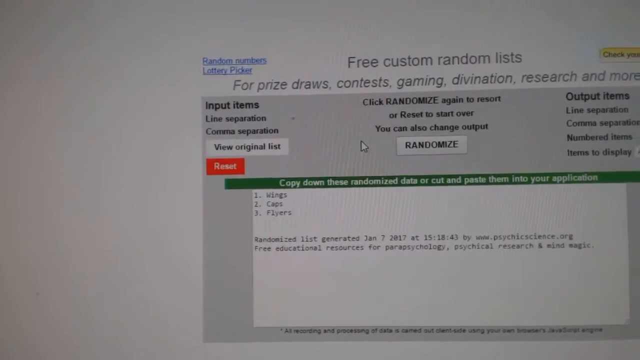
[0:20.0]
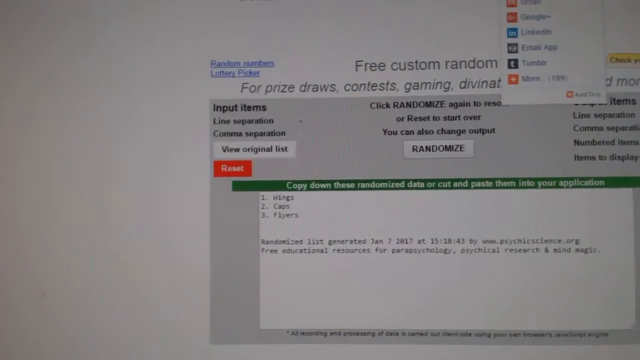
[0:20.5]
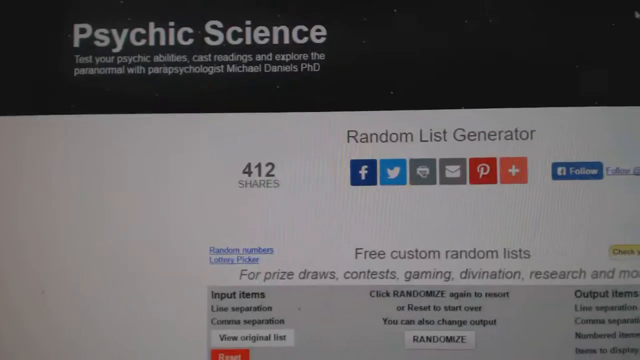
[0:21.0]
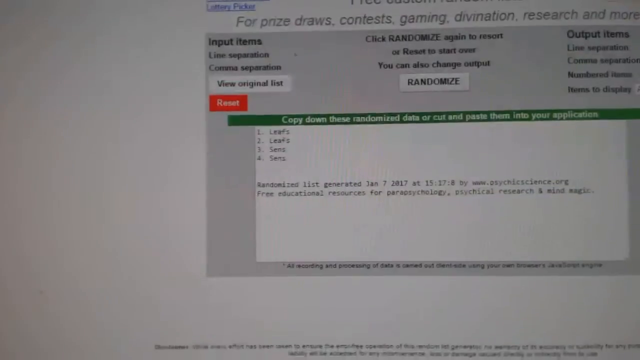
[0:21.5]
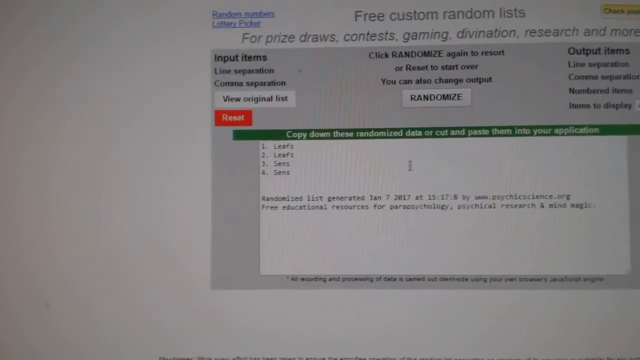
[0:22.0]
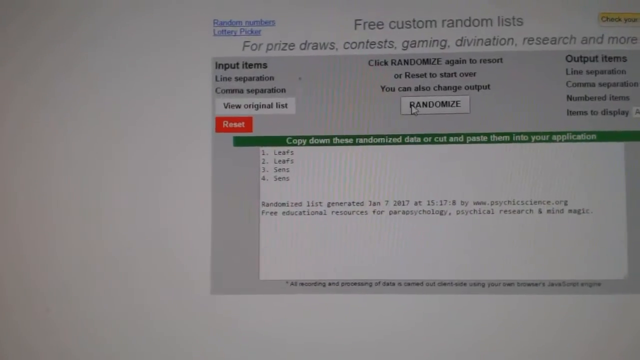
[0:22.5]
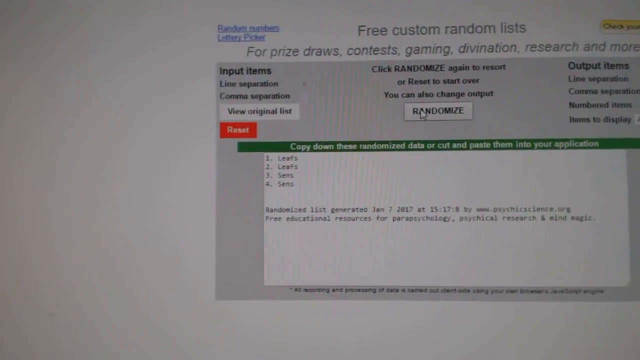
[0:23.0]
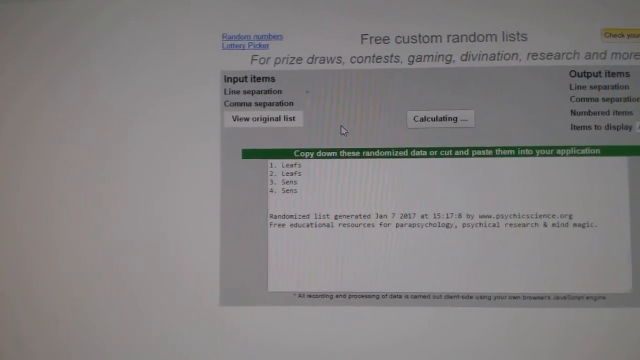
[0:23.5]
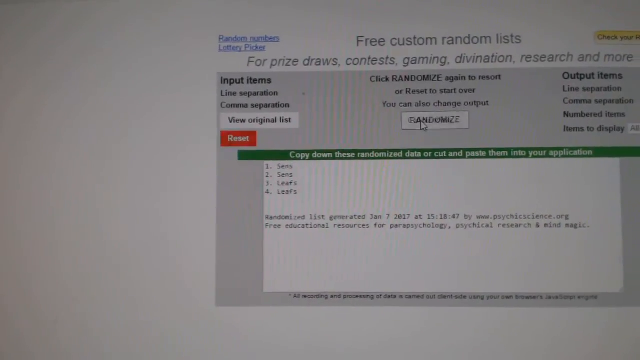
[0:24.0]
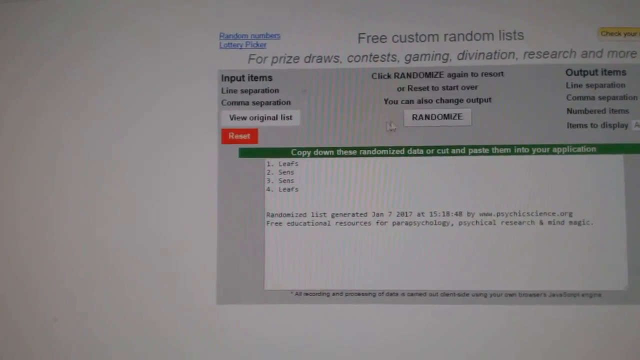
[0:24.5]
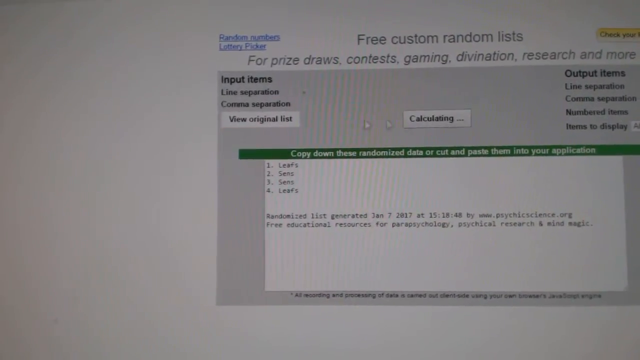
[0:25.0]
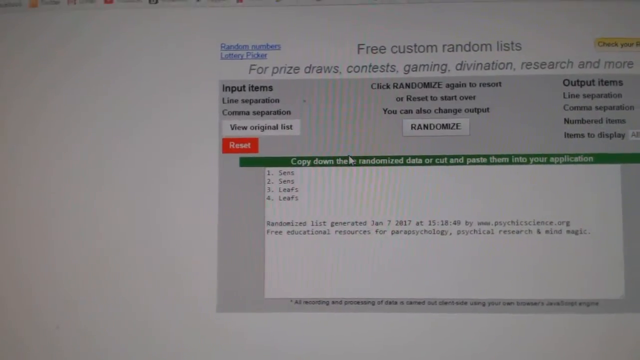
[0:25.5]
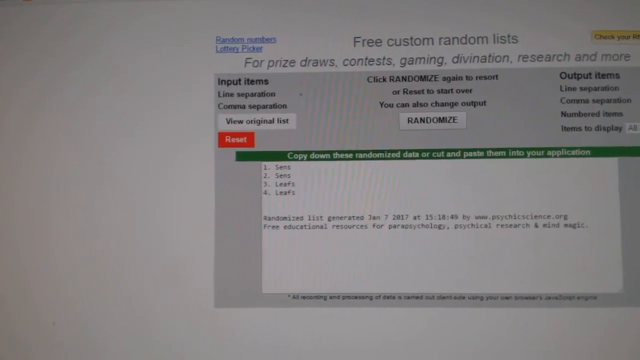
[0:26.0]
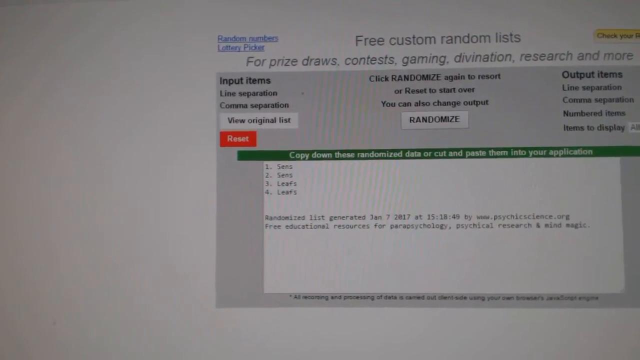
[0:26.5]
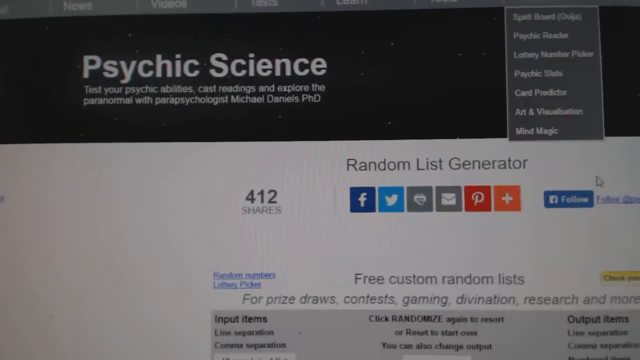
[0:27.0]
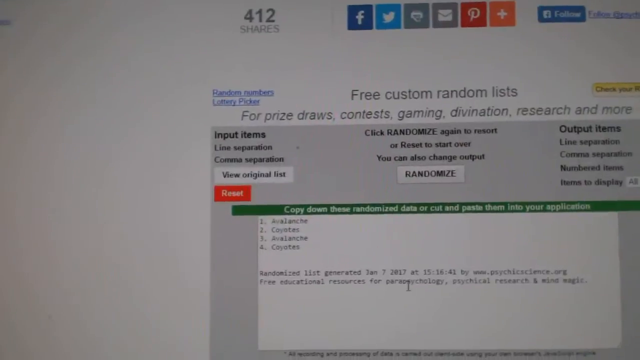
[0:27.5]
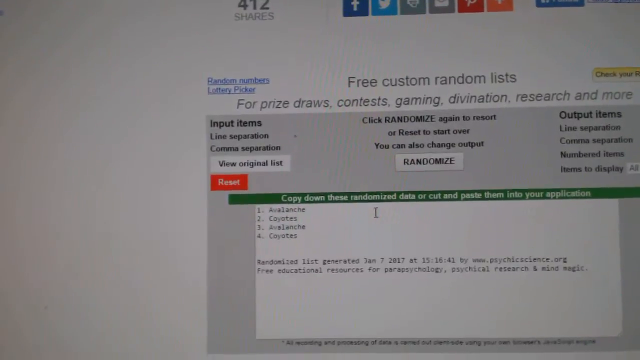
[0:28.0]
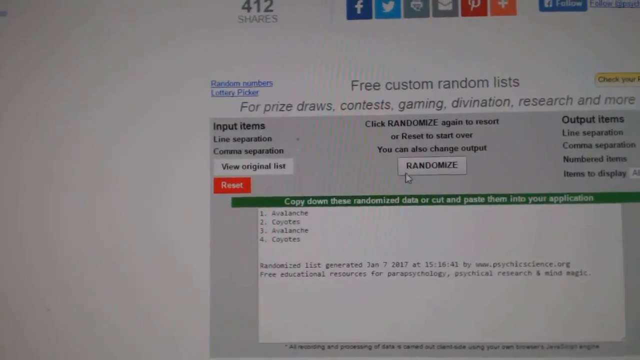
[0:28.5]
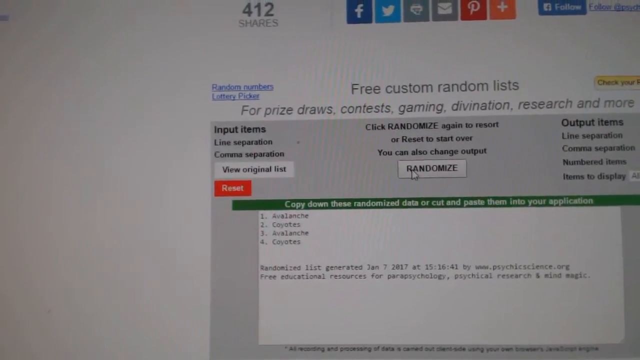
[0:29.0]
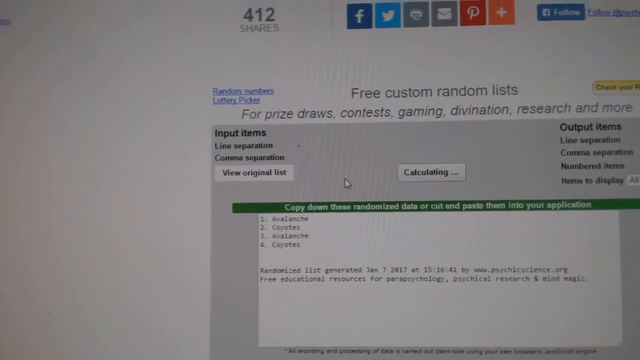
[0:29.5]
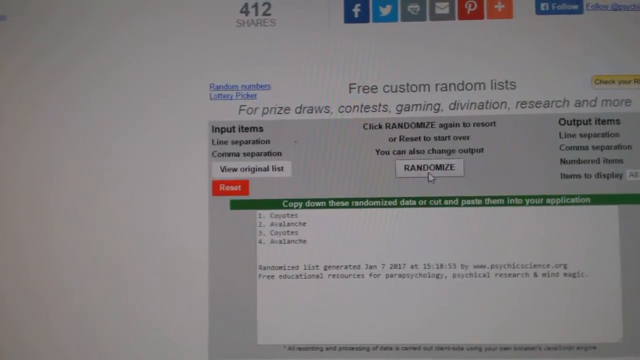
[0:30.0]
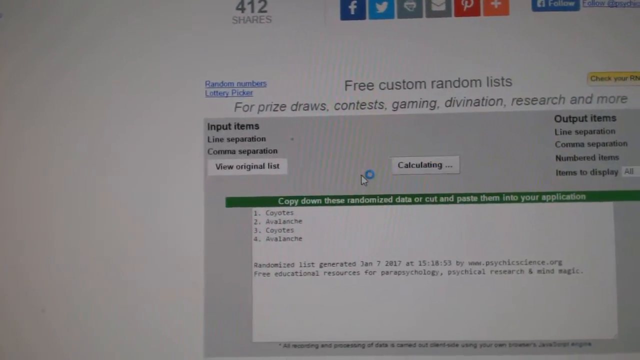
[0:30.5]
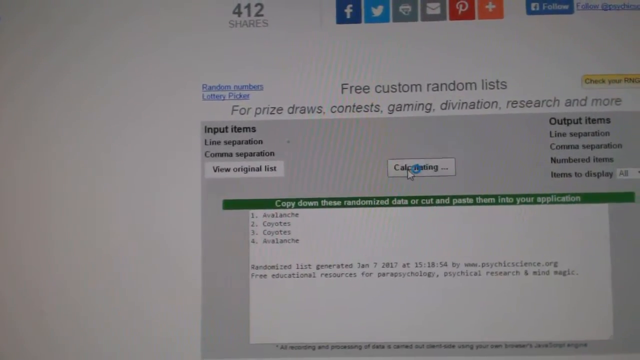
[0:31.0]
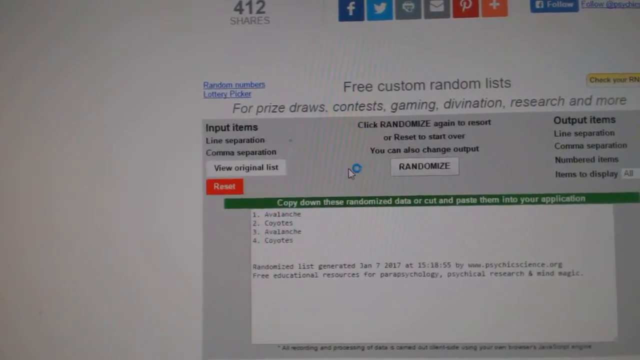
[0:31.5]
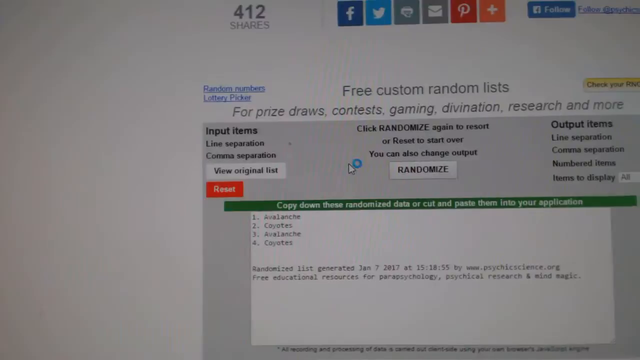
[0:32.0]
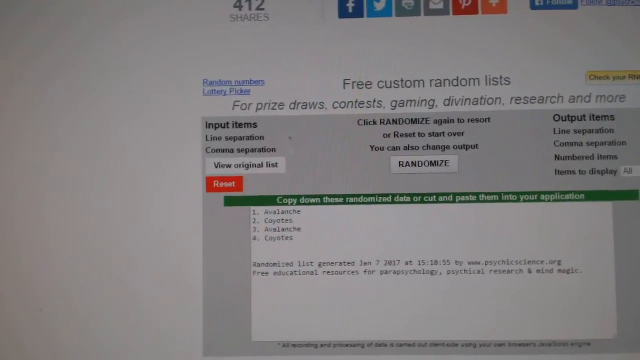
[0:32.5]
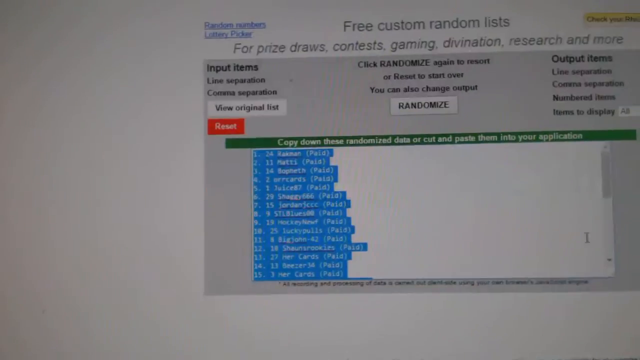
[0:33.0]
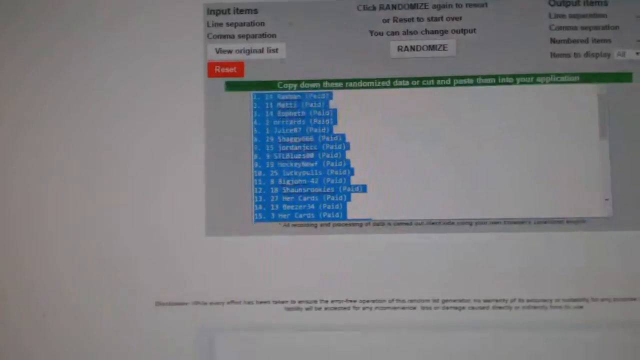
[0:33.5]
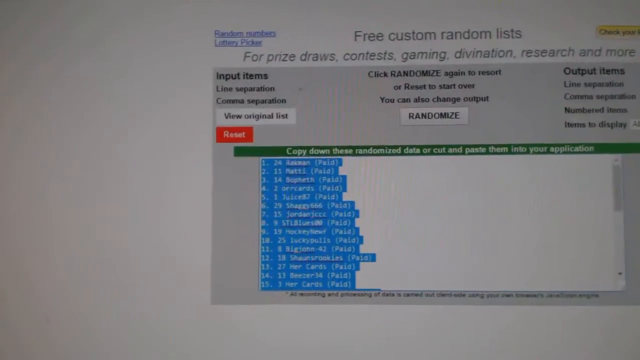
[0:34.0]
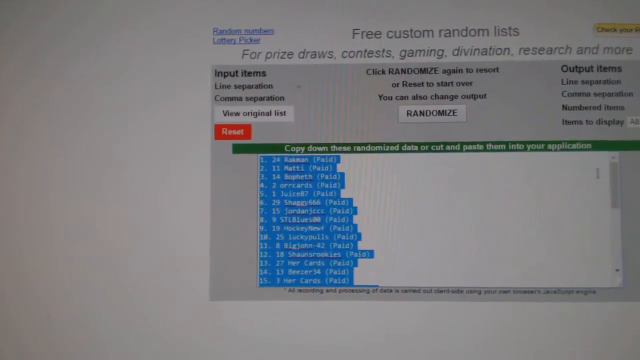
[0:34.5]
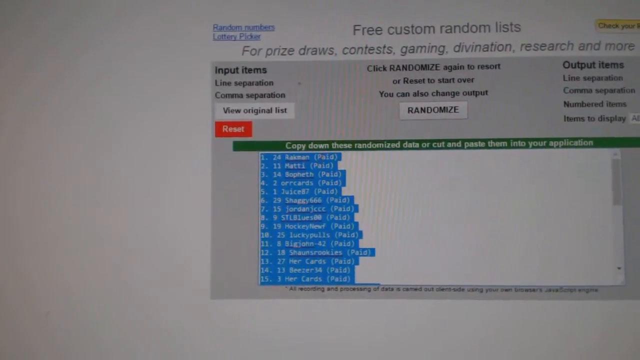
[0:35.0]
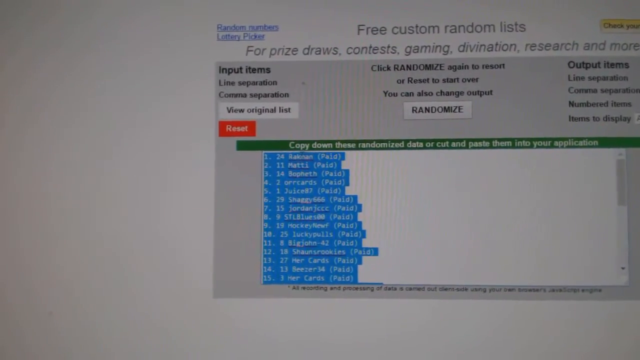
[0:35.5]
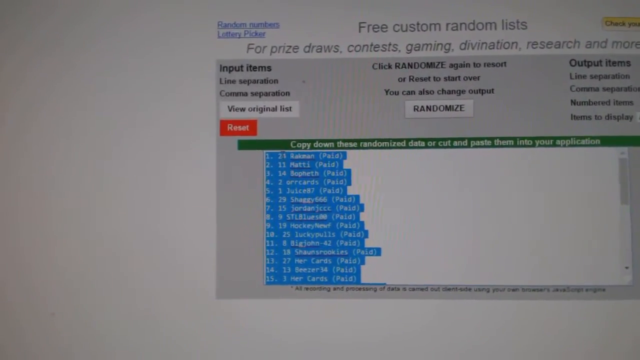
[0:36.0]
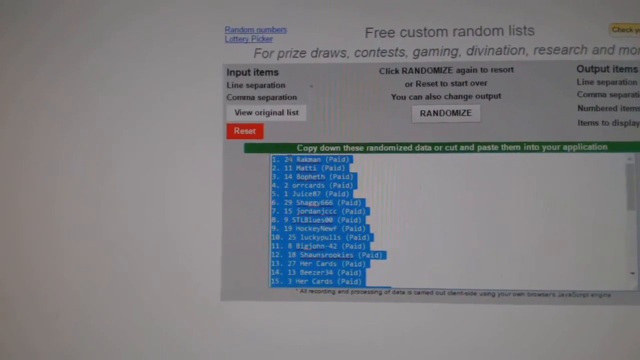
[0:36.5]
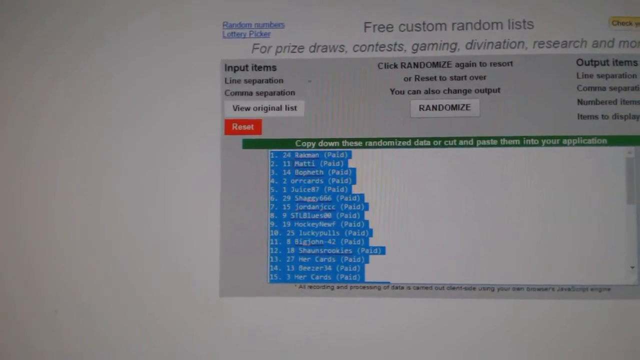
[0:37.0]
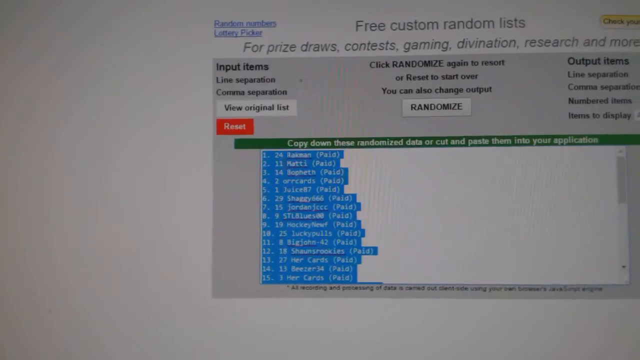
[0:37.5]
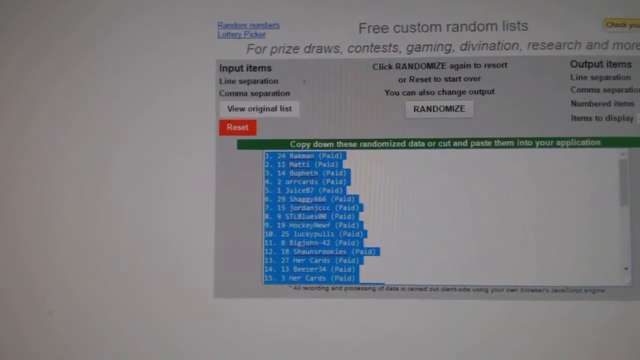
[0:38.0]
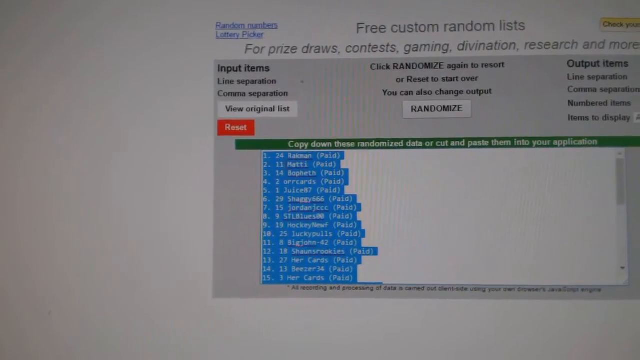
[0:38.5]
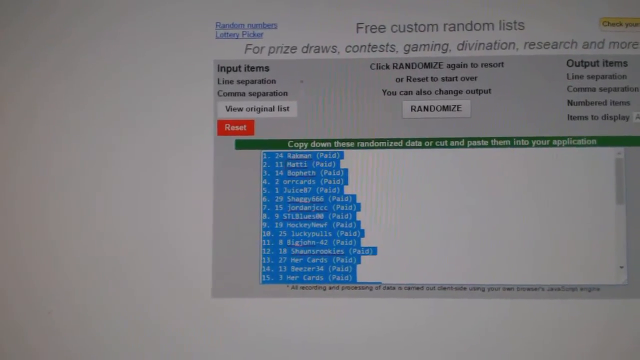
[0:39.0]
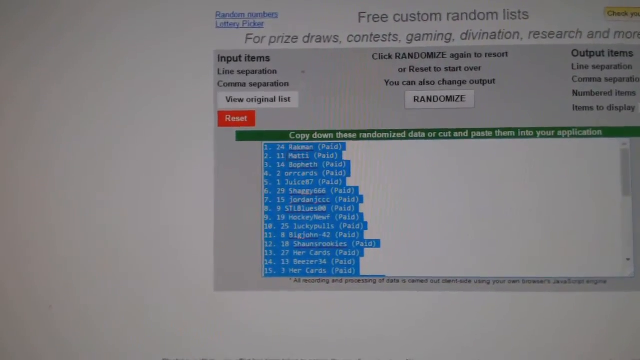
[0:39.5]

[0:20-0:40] The website is still being videotaped. At the top, a black banner reads "psychic science" in white text. Underneath, in the white area, social icons, including Facebook and Twitter, run from left to right, and above them text reads "random list generator." The camera scrolls down to an area that reads "free custom random lists," a roughly gray rectangular panel with another white rectangular area inside it. A mouse pointer hovers over a button labeled "Randomize"; when it is clicked, the button reads "calculating" and then returns to "randomize." It is clicked about two or three times, and then the person seems to click the randomize option a couple more times. Underneath, in the white area, some text is highlighted in a turquoise-blue-like color. The camera shakes a little as it records.